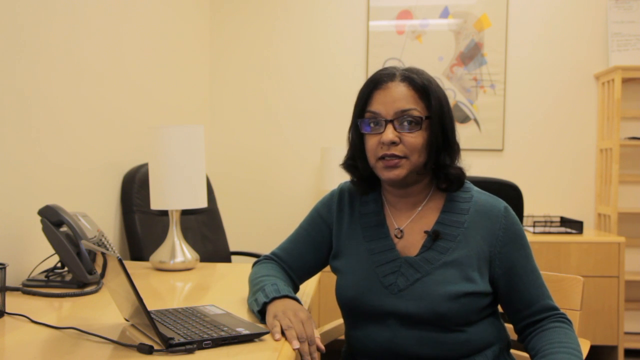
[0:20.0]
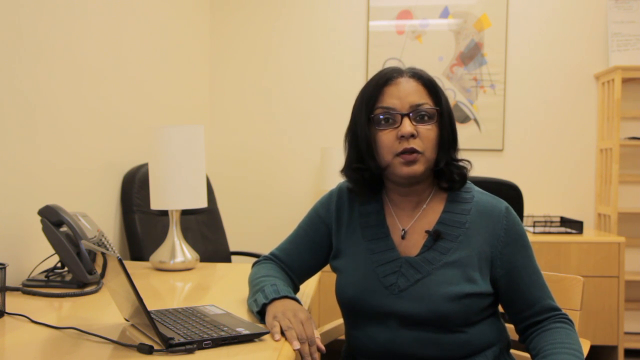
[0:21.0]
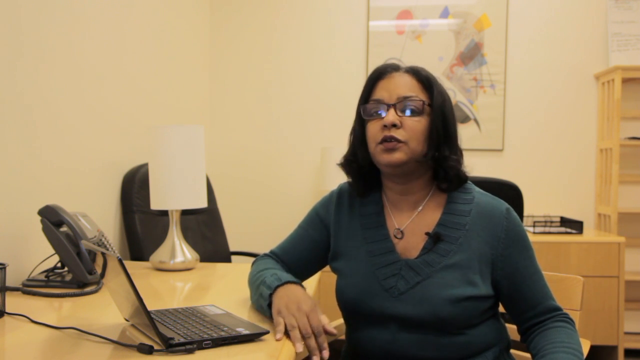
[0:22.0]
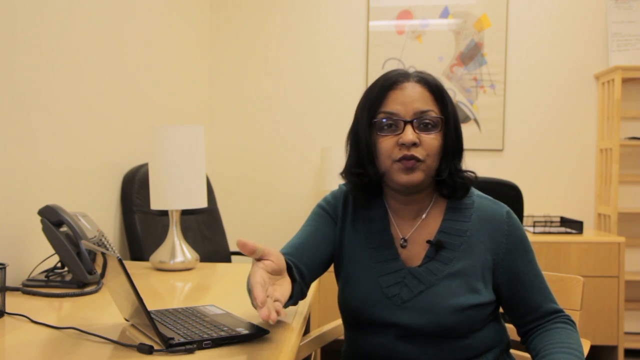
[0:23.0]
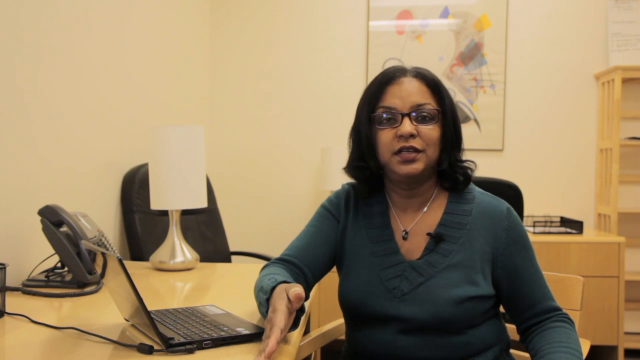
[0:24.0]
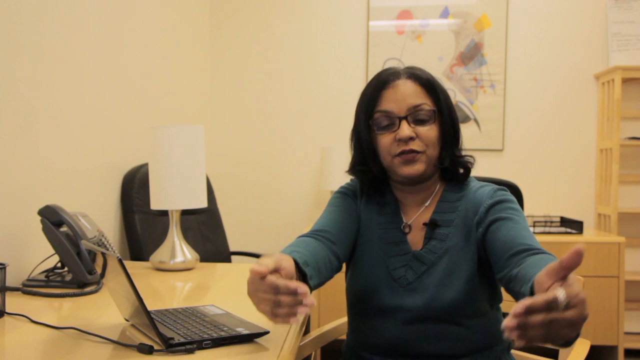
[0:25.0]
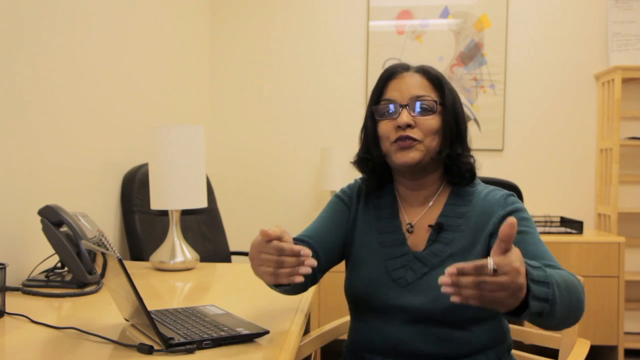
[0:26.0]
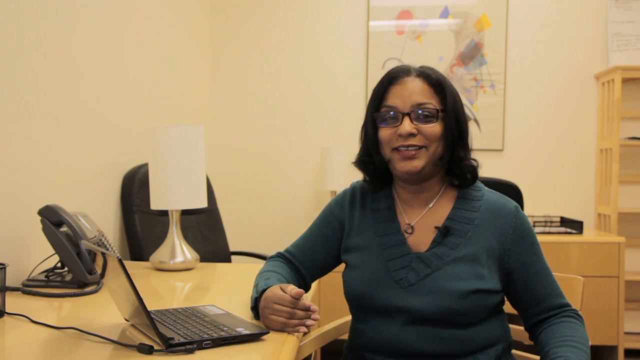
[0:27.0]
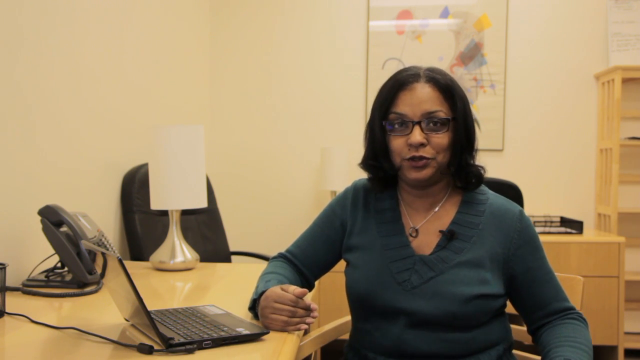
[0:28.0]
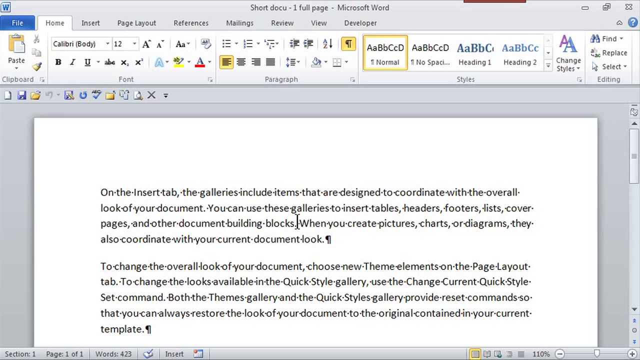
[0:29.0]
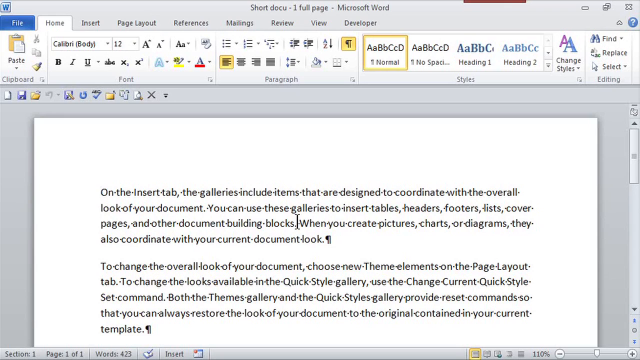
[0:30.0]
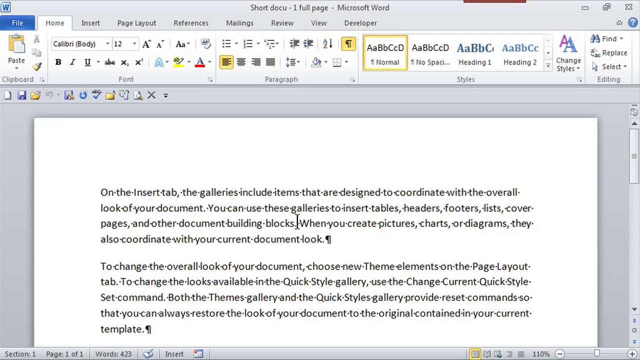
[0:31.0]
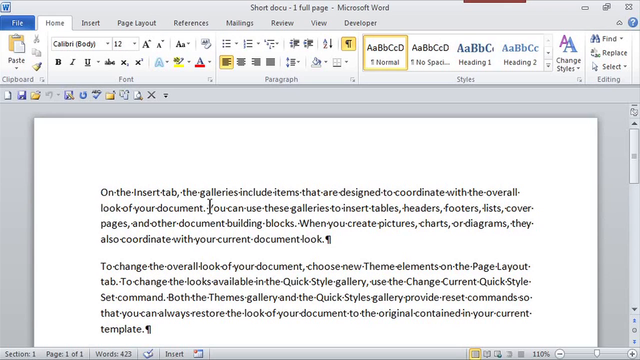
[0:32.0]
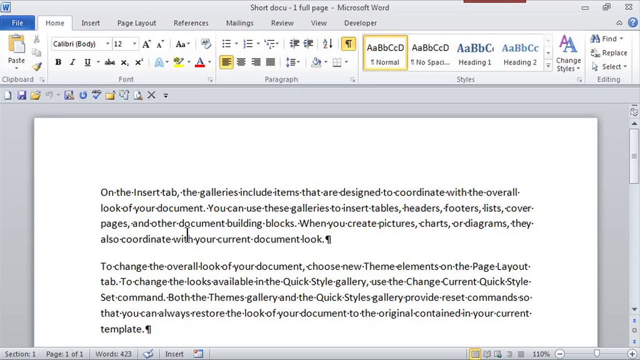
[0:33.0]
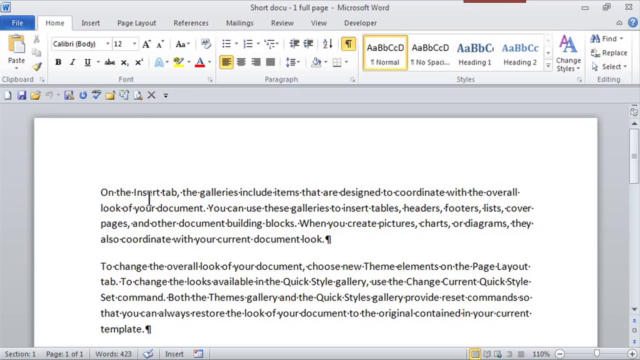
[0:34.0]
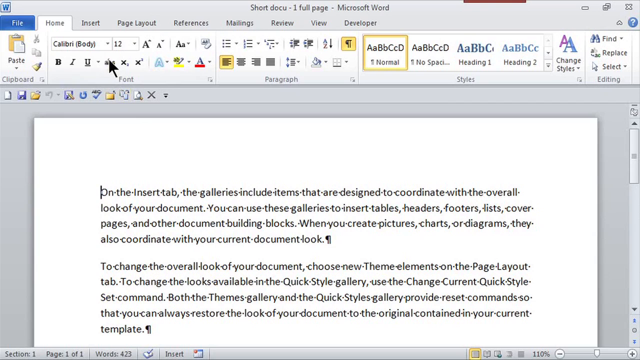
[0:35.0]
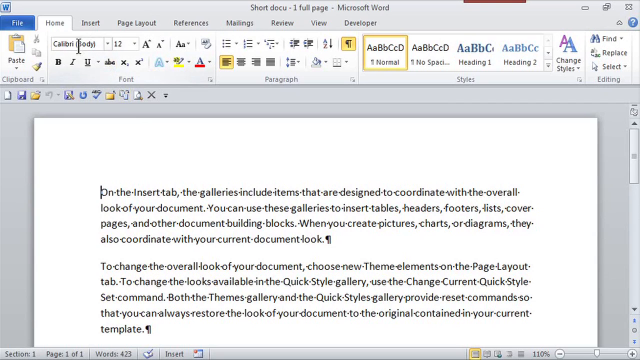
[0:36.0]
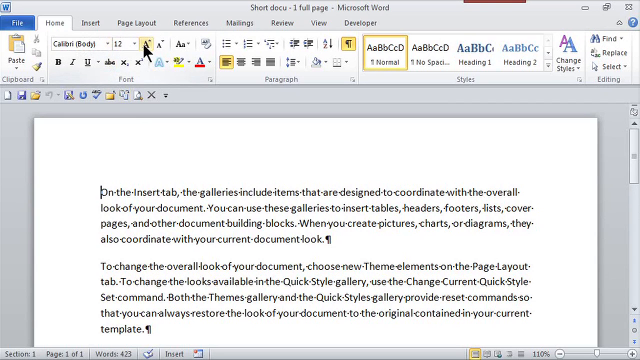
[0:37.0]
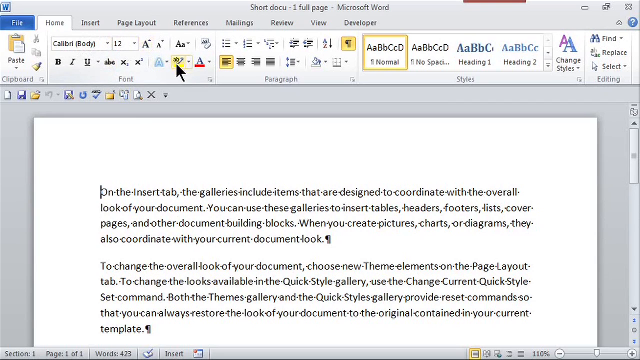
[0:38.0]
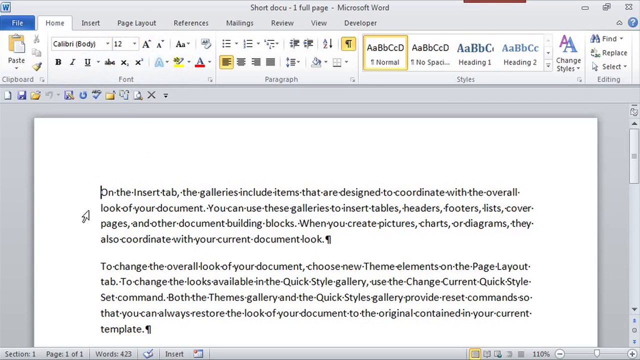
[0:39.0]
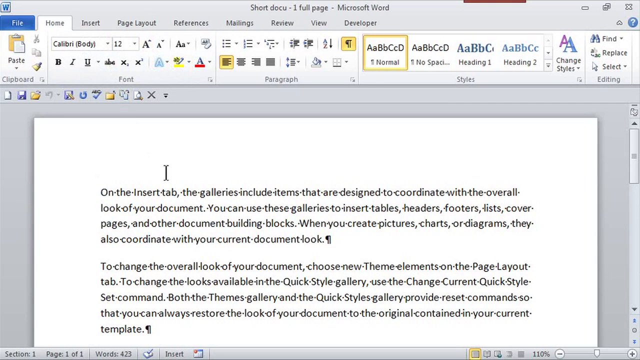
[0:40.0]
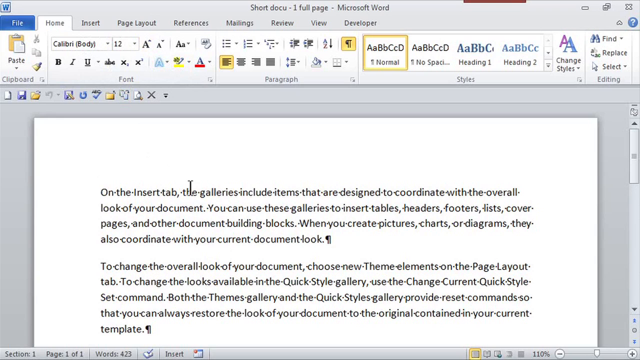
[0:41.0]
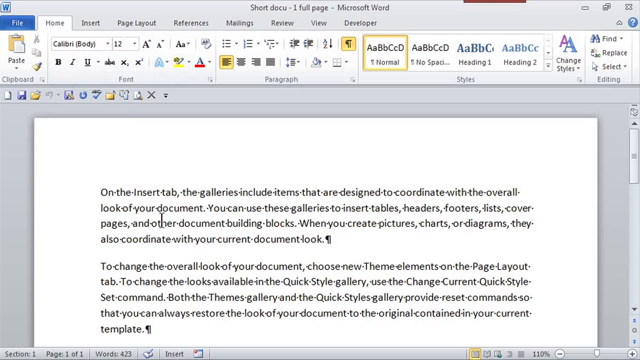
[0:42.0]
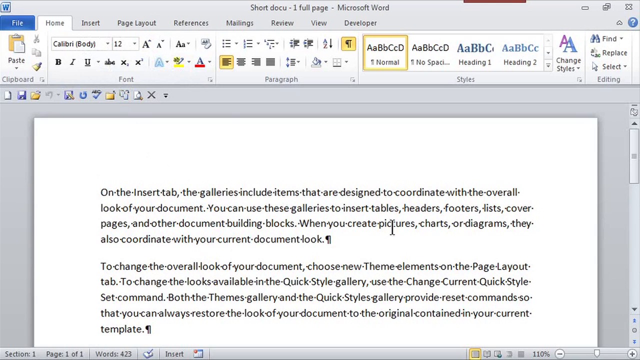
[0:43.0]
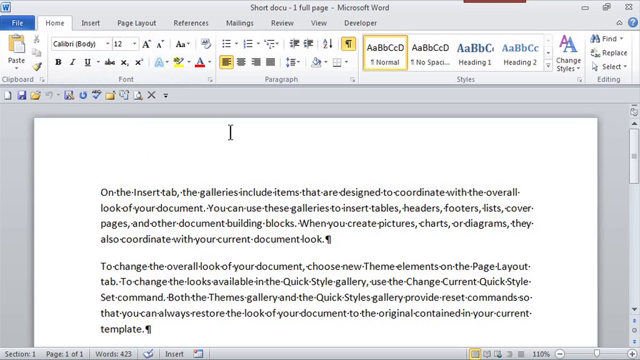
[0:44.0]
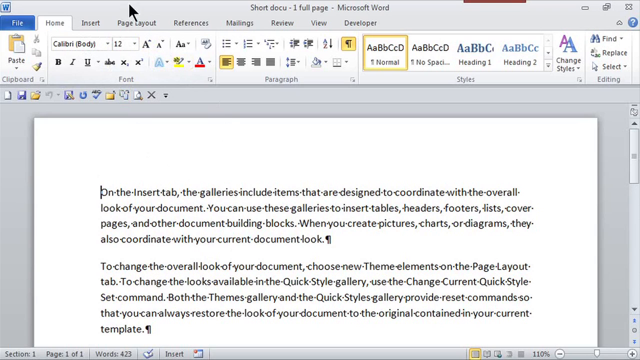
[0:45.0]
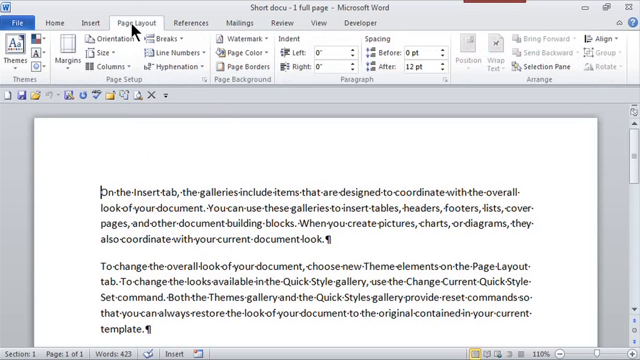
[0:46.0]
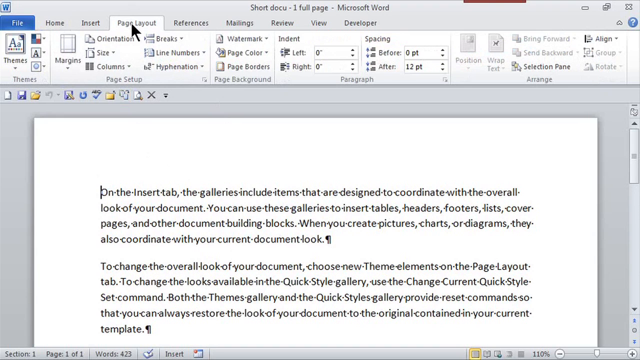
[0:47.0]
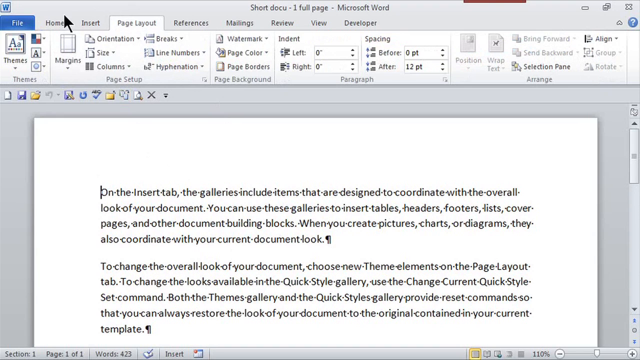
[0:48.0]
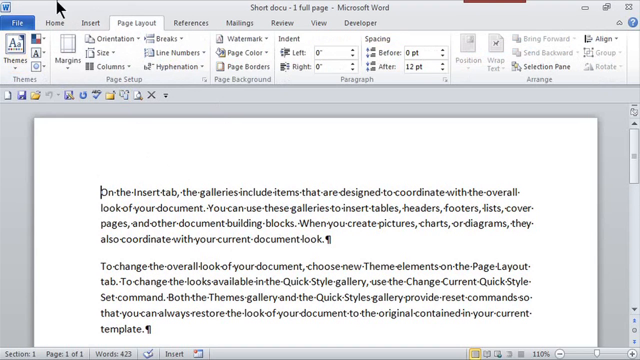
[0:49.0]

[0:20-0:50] The woman continues talking. A web page is then opened that reads: "the galleries include items that are designed to coordinate with overall look of your document. You can use these galleries to insert tables, headers, footers, list, covers, pages, and other documents, building blocks. When you create pictures, charts, or diagrams, they also coordinate with your current document look. To change the overall look of your document, choose new theme elements on the page layout tab."